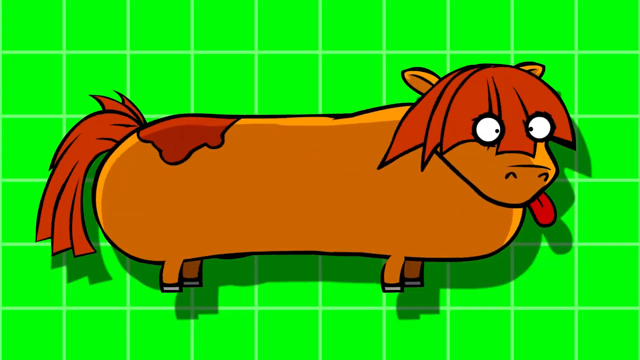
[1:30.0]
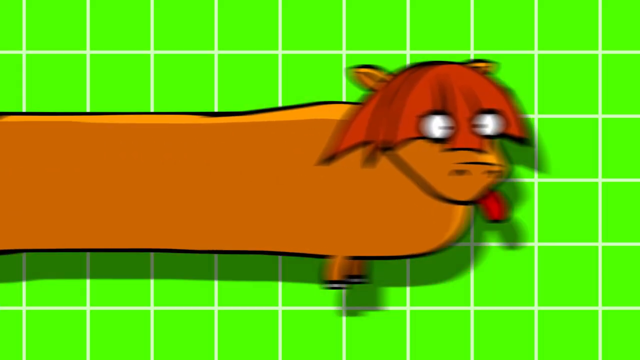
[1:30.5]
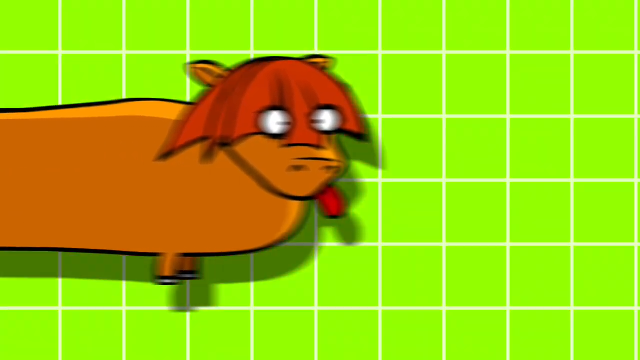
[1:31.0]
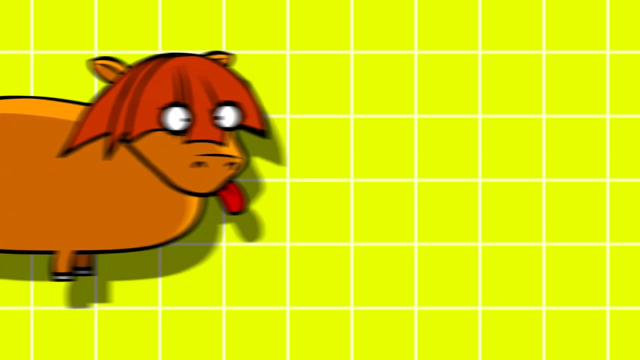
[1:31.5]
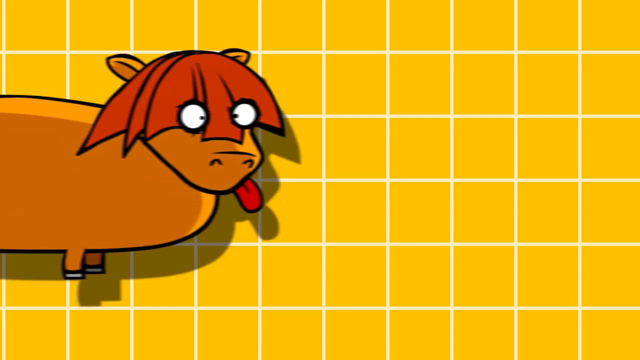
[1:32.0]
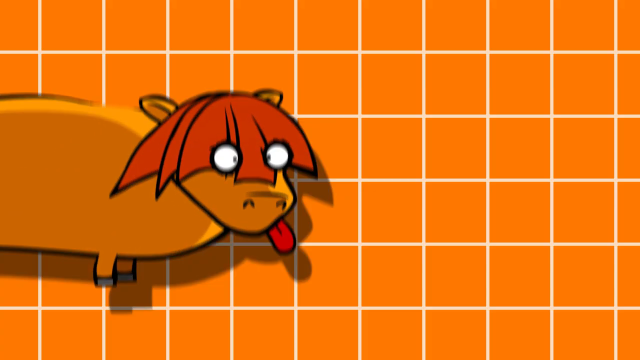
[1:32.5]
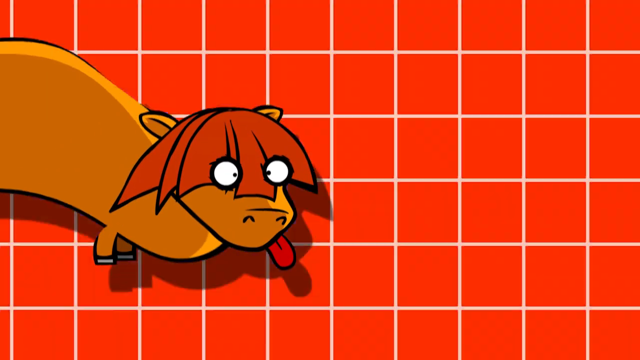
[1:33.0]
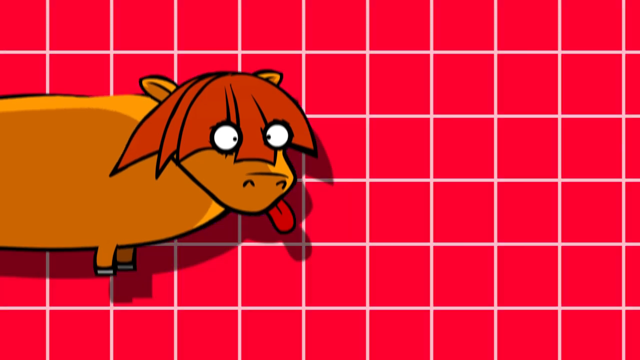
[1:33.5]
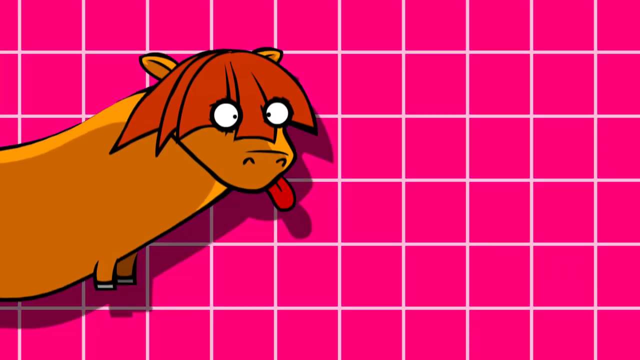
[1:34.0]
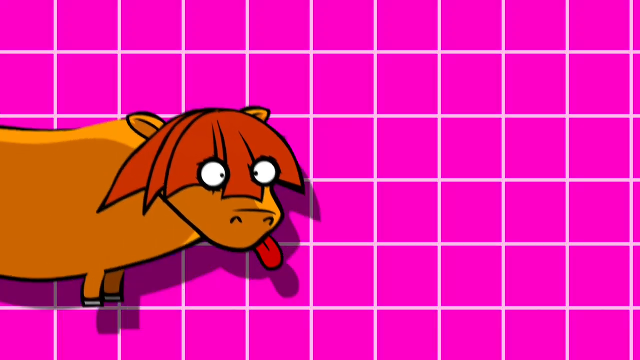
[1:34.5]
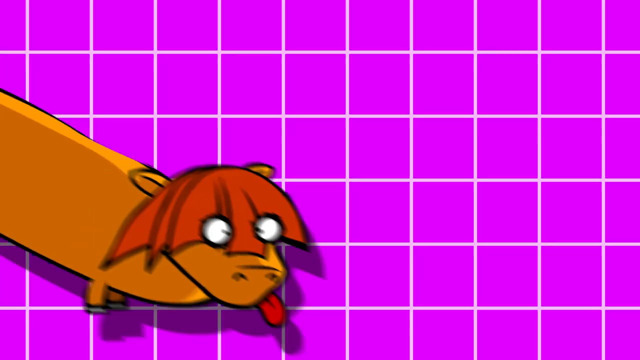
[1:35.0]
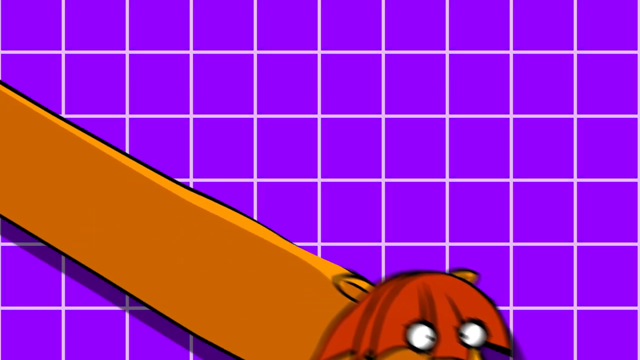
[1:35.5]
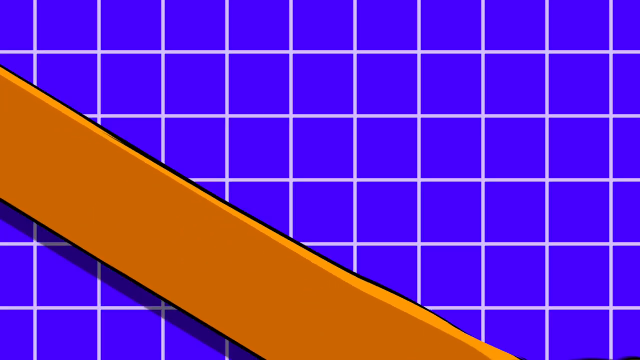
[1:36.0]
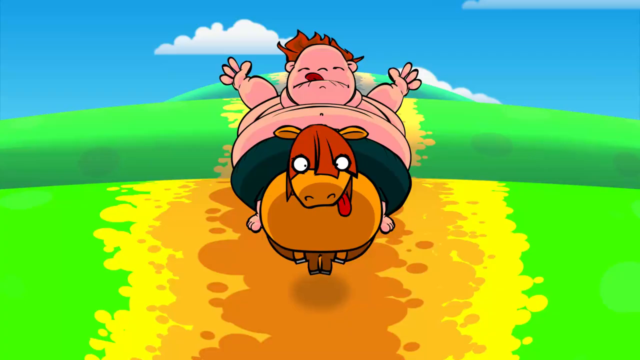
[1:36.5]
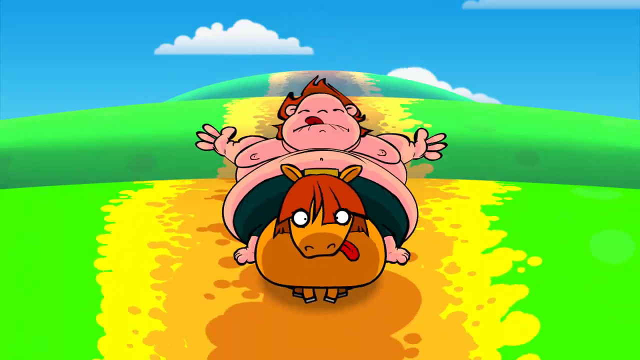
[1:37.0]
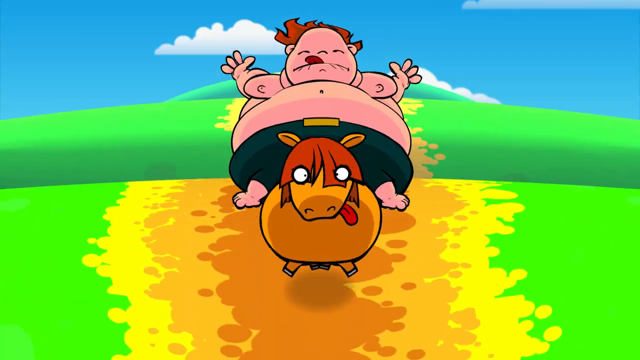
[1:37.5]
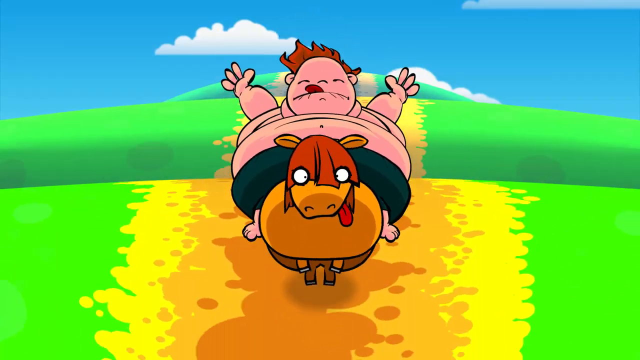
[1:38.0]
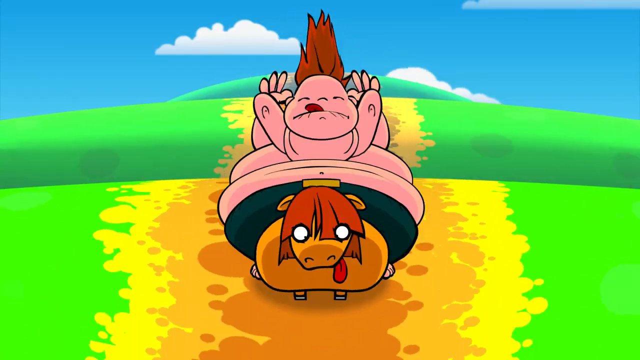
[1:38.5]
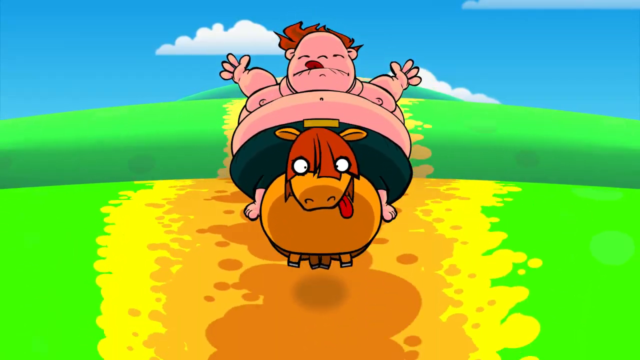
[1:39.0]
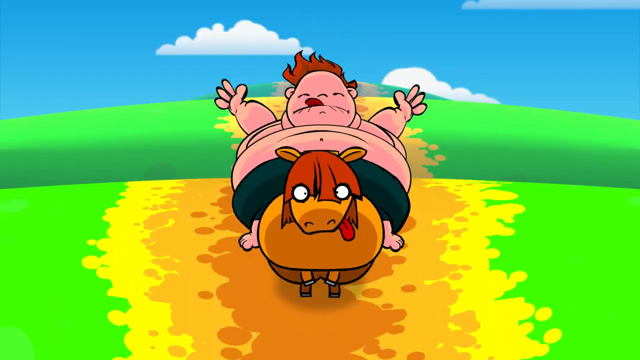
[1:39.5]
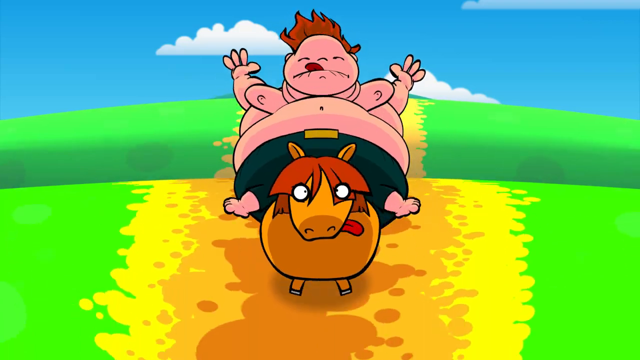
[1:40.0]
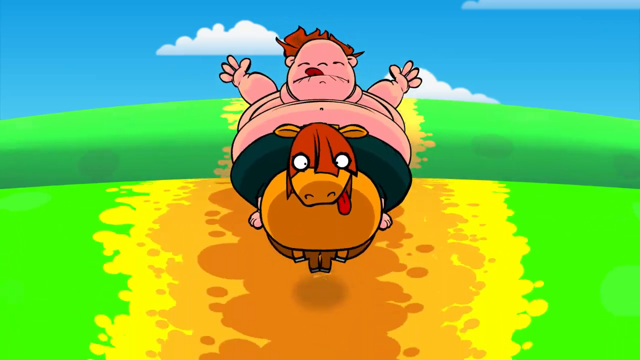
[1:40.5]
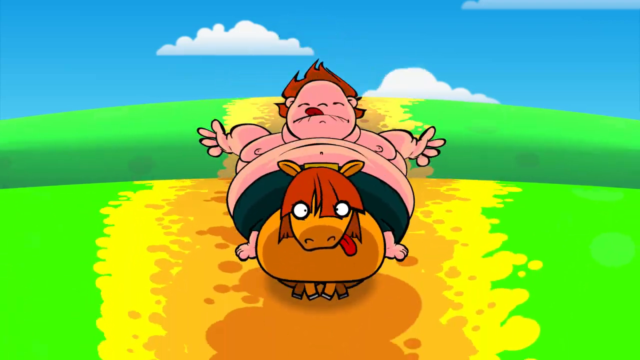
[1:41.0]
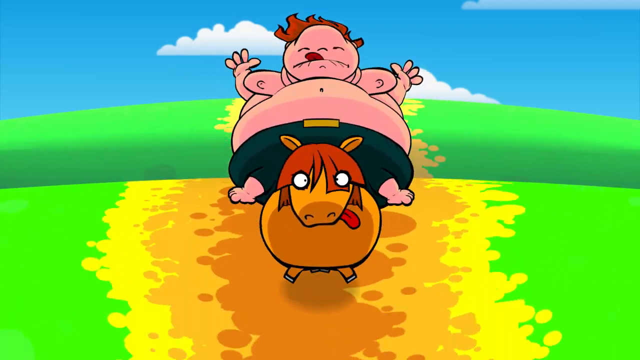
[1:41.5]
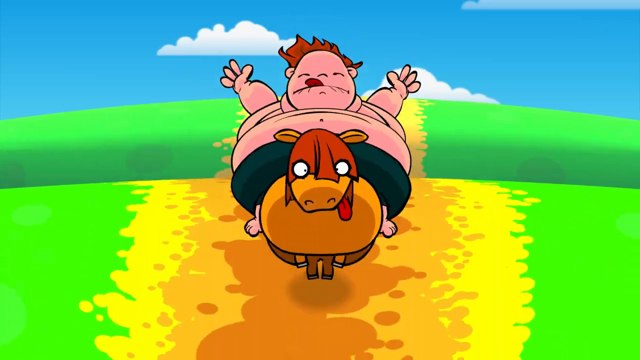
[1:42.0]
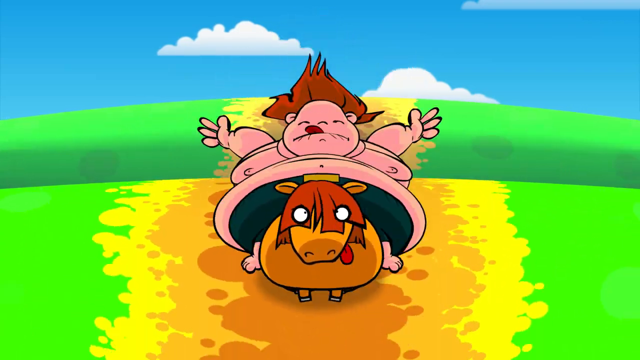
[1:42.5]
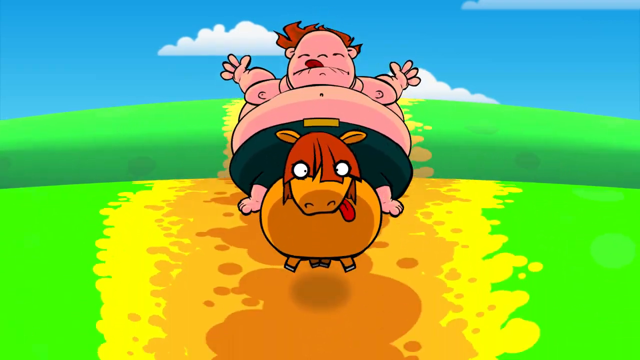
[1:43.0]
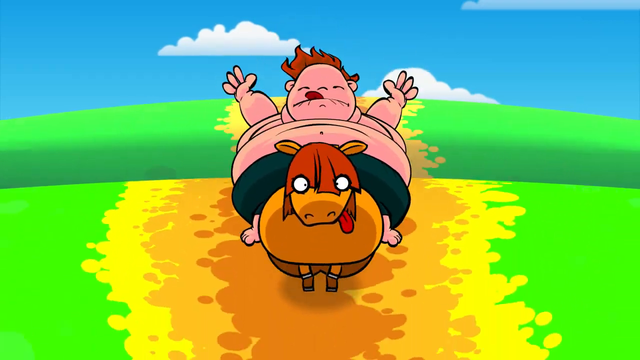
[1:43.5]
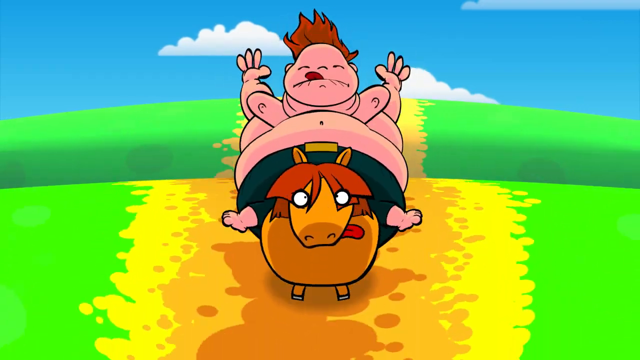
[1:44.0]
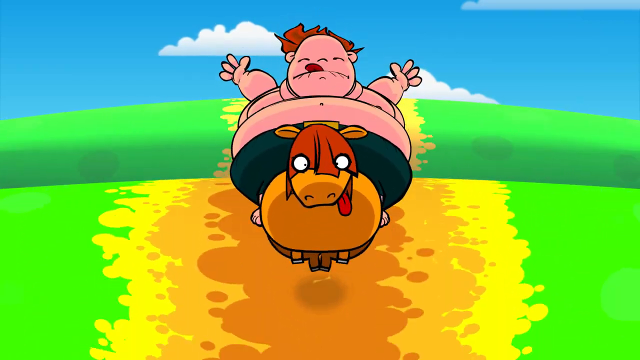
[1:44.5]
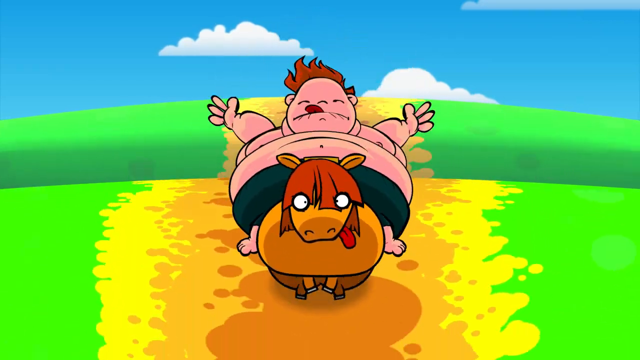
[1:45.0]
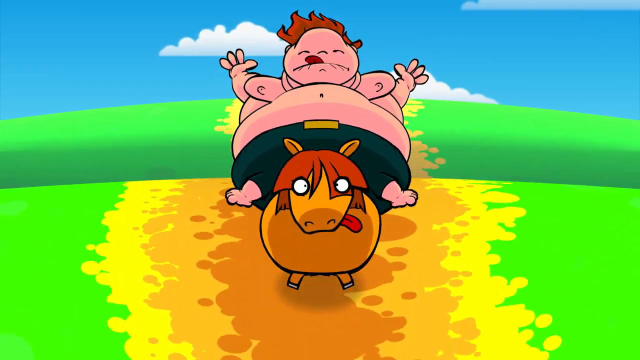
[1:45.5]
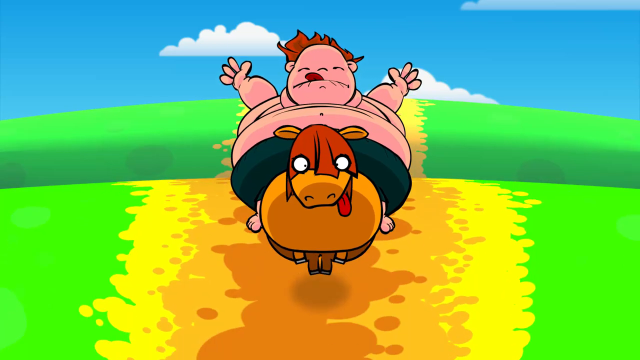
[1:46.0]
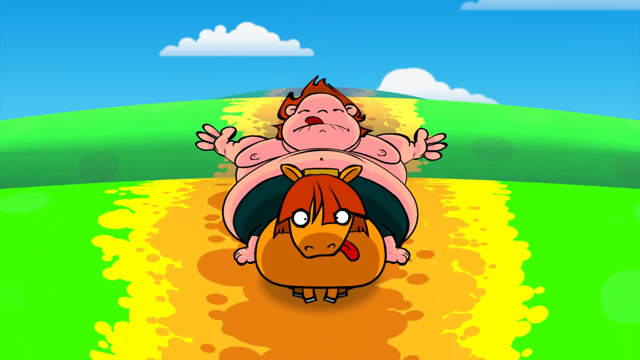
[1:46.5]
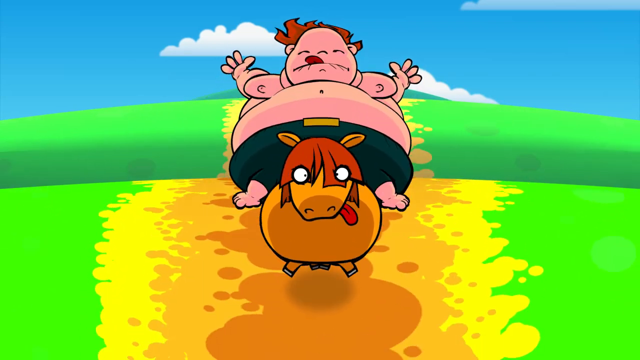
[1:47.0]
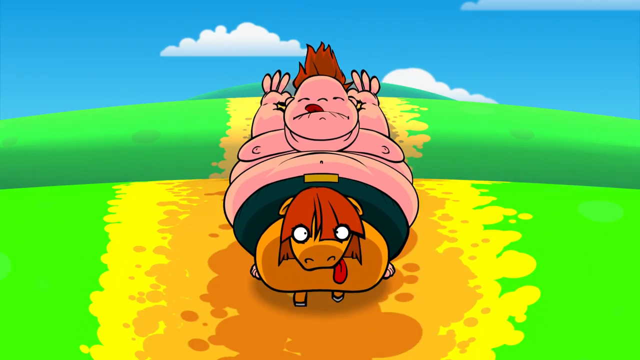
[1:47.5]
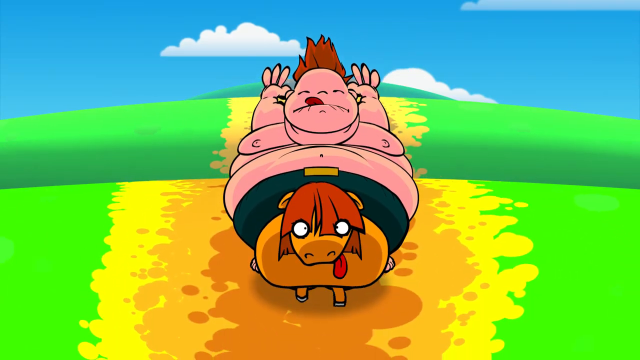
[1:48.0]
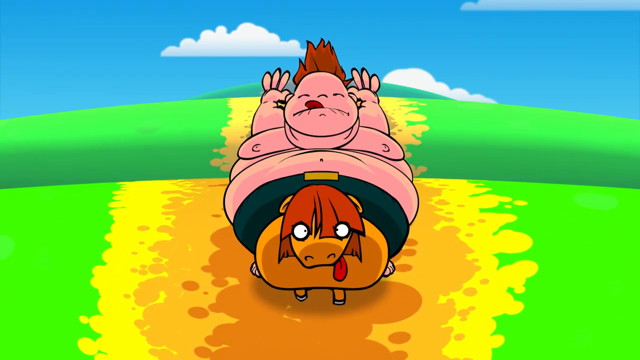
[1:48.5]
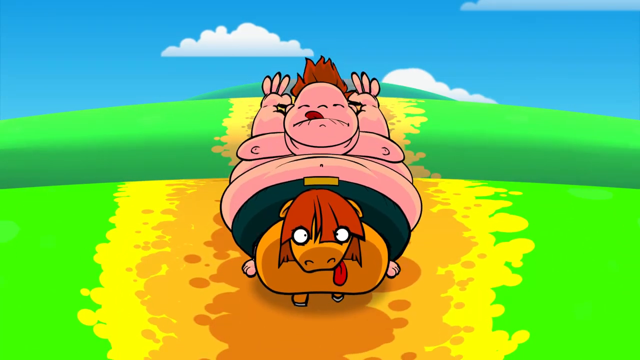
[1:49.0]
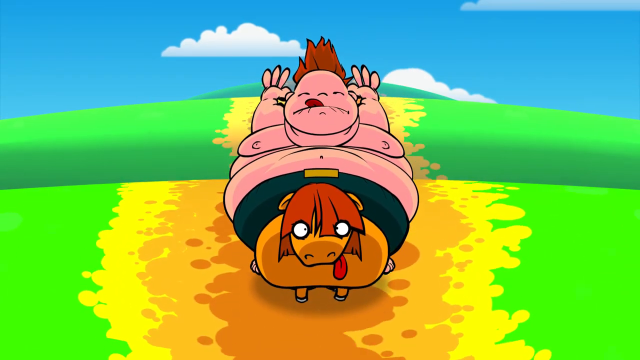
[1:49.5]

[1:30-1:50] The cow's body elongates, stretching from the front legs to the right while the rear legs remain still; the front part curves up and down, and the background keeps switching colours such as blue, red and yellow. Then the characters from the beginning return: the overweight kid rides the cow on the same mountain, hands wide open and tongue out, enjoying the ride. At first they run fast toward the viewer in a looped shot that does not change; then they slow down, travel slowly toward the viewer and stop for a short while. After that the cow moves quite slowly, as if tired.